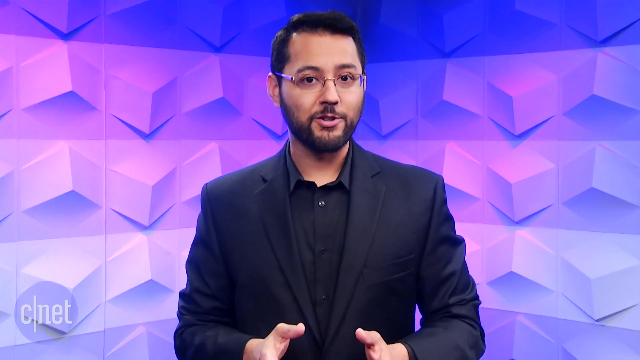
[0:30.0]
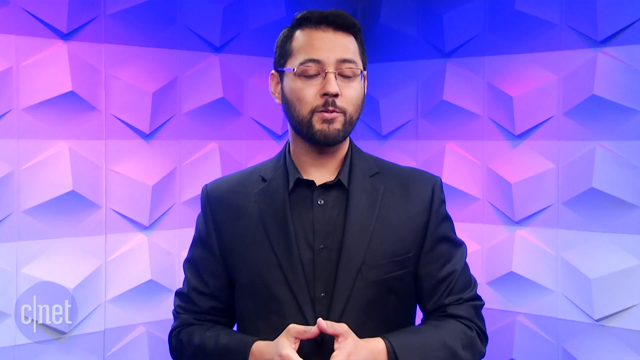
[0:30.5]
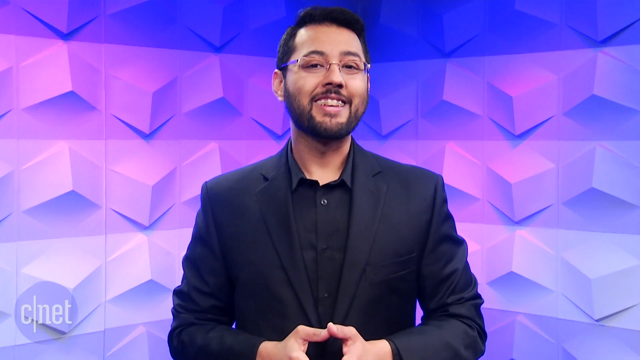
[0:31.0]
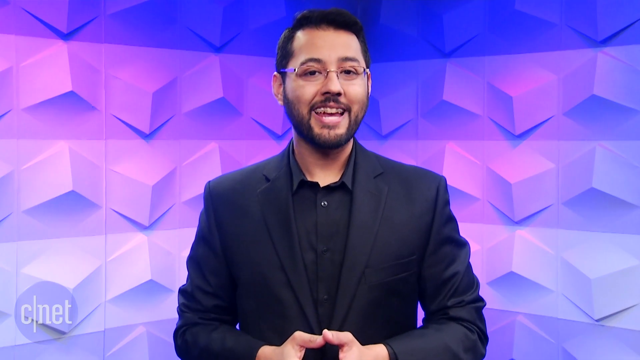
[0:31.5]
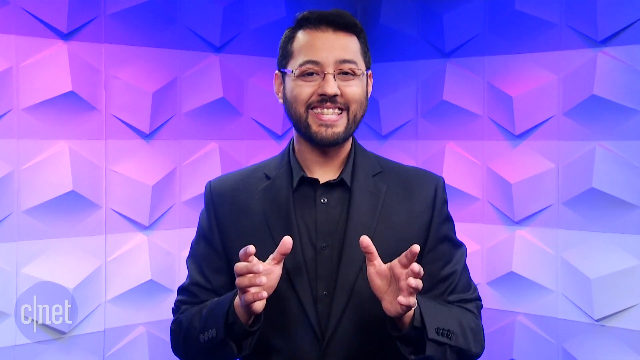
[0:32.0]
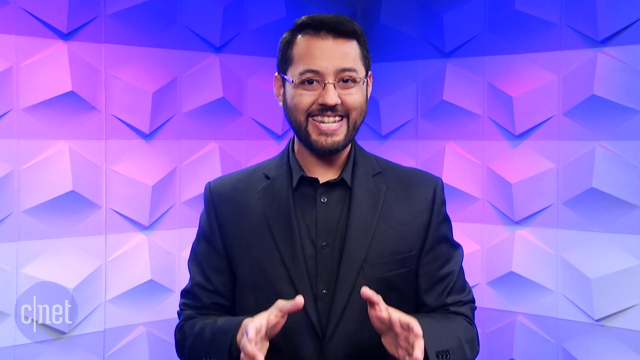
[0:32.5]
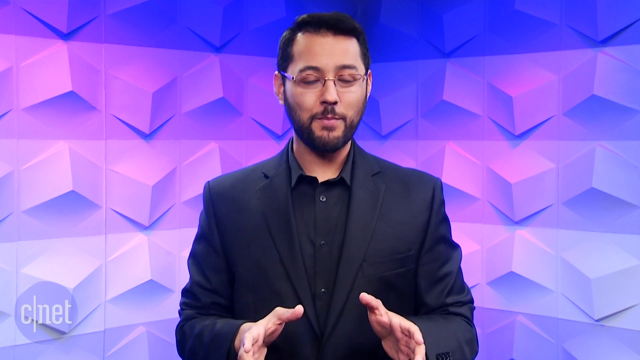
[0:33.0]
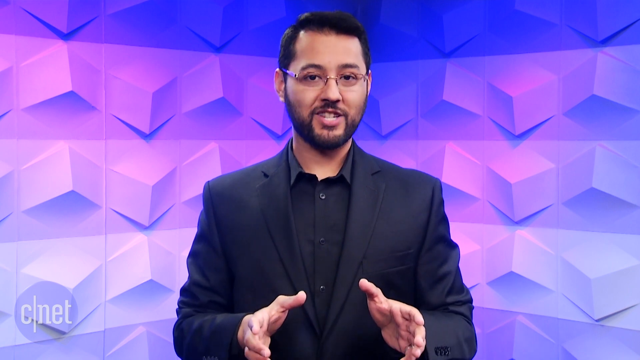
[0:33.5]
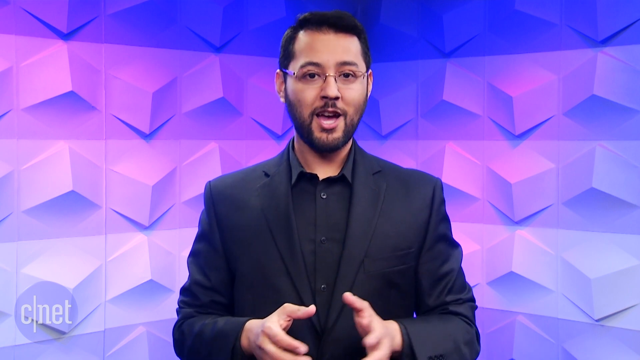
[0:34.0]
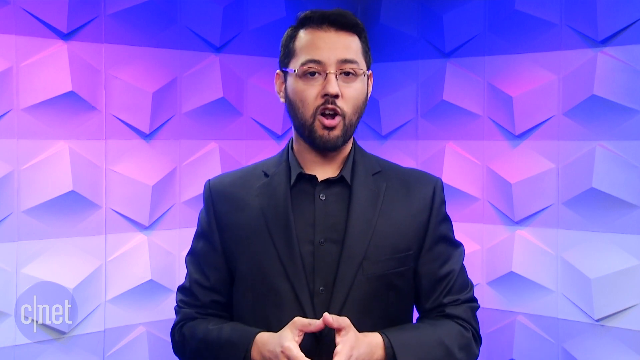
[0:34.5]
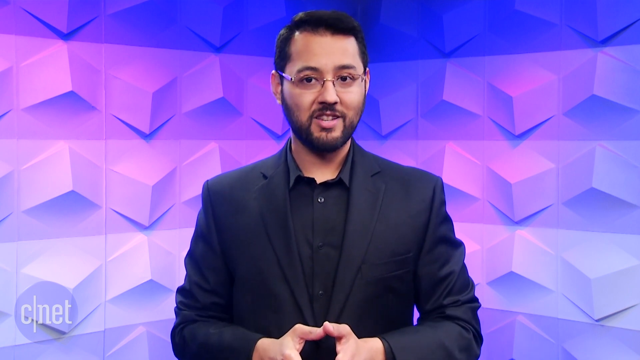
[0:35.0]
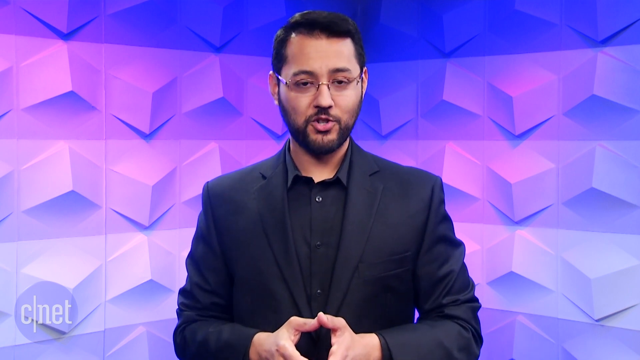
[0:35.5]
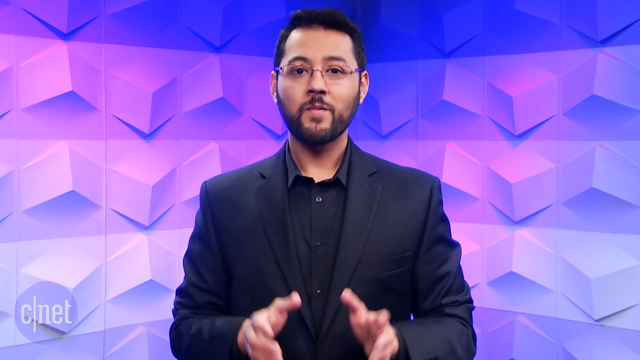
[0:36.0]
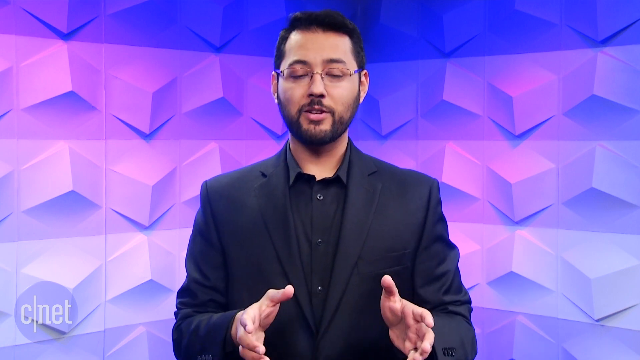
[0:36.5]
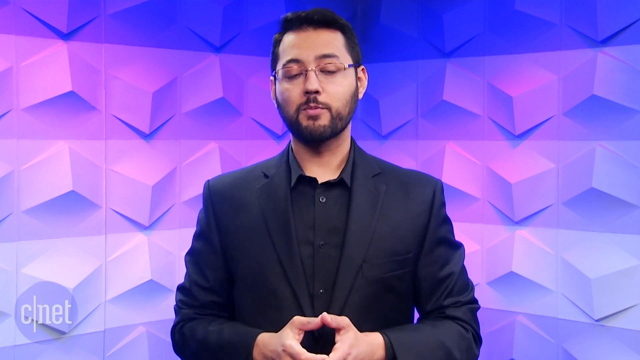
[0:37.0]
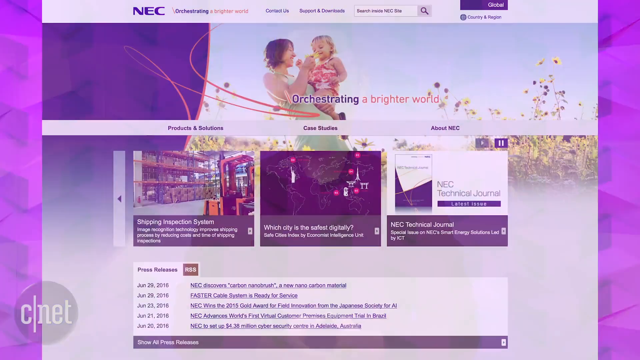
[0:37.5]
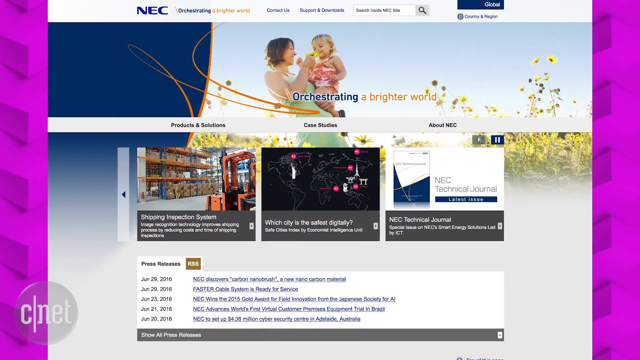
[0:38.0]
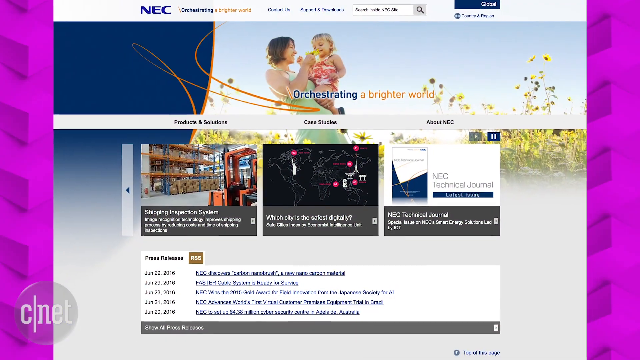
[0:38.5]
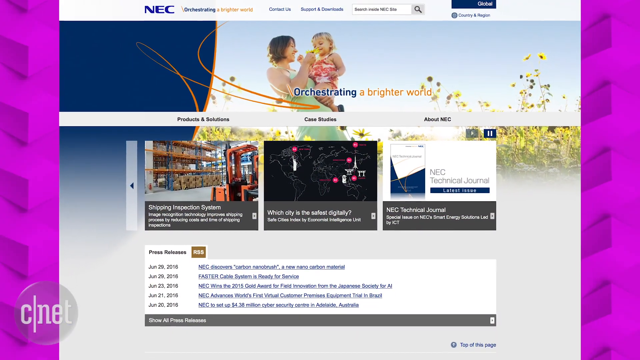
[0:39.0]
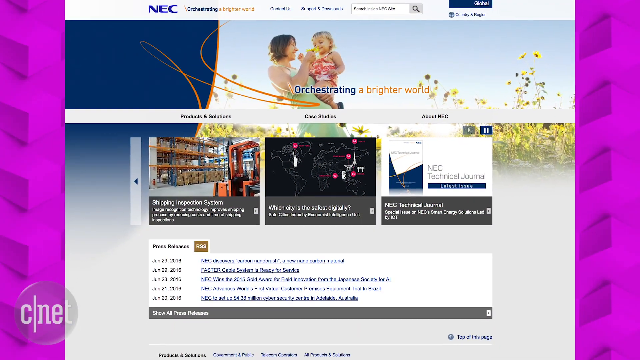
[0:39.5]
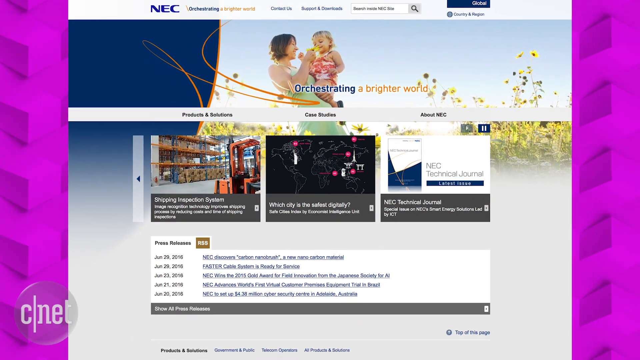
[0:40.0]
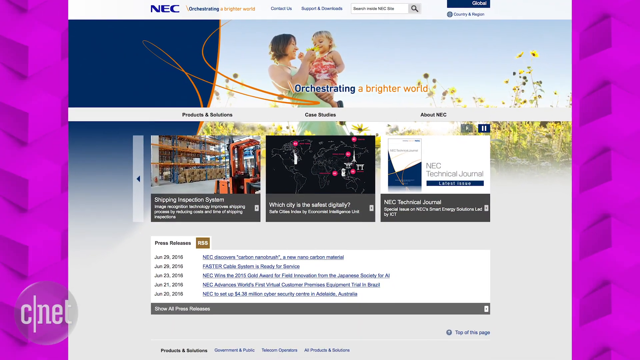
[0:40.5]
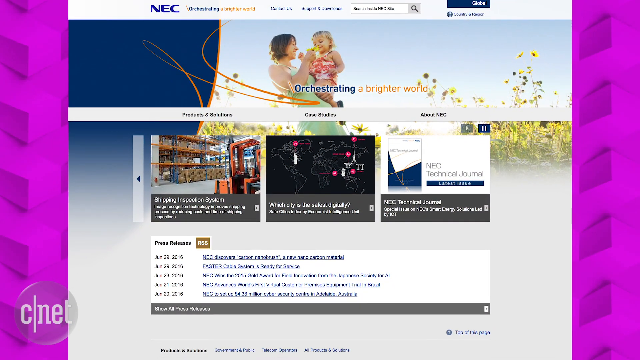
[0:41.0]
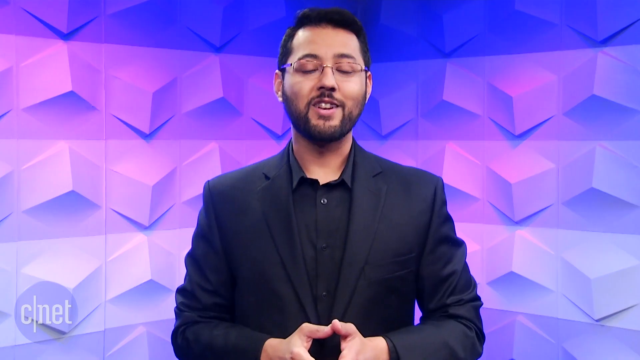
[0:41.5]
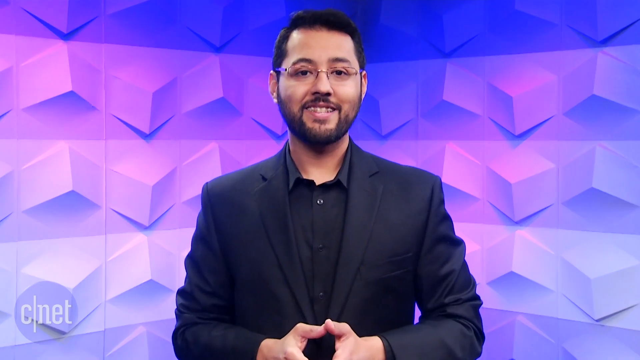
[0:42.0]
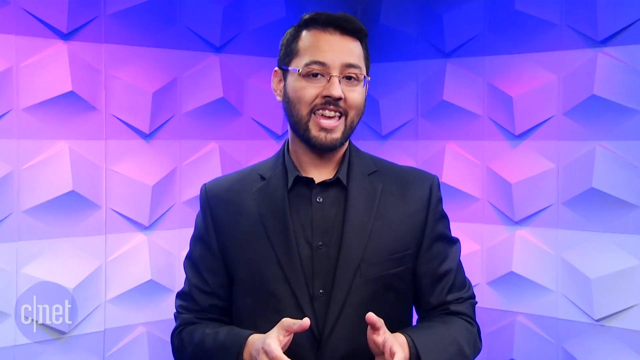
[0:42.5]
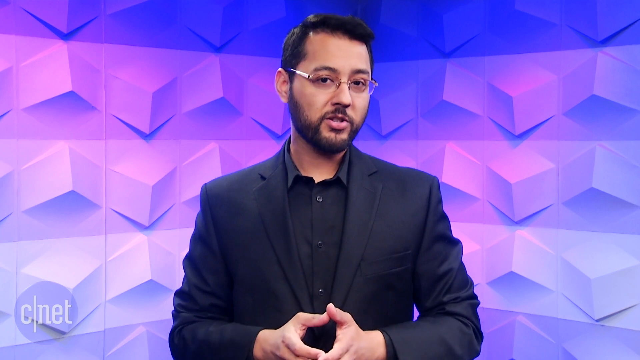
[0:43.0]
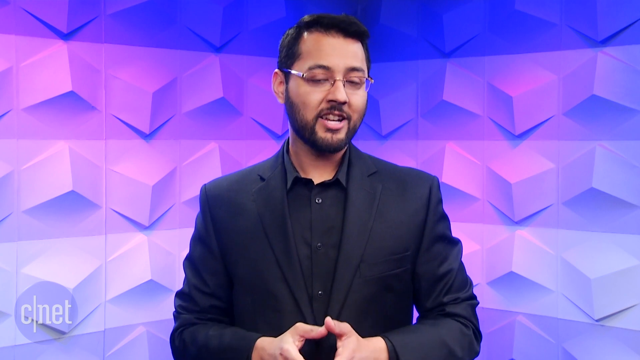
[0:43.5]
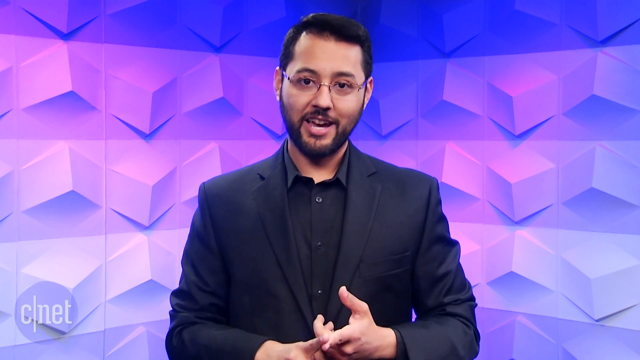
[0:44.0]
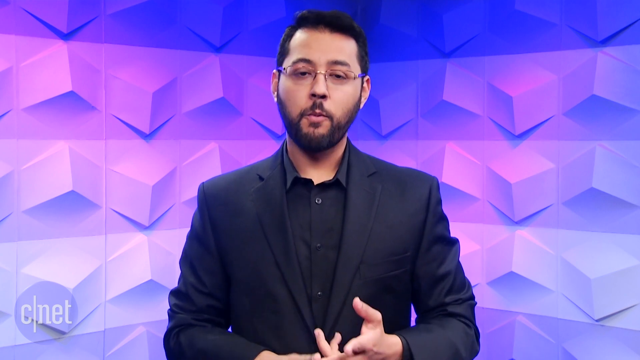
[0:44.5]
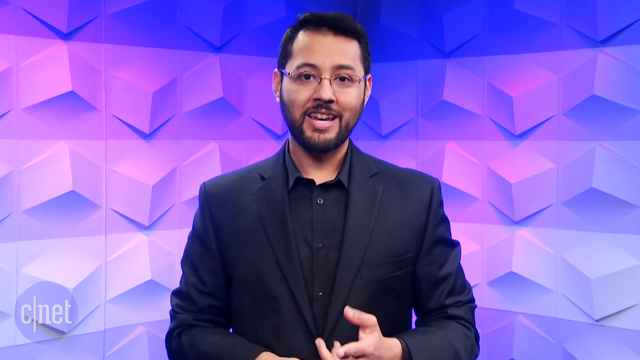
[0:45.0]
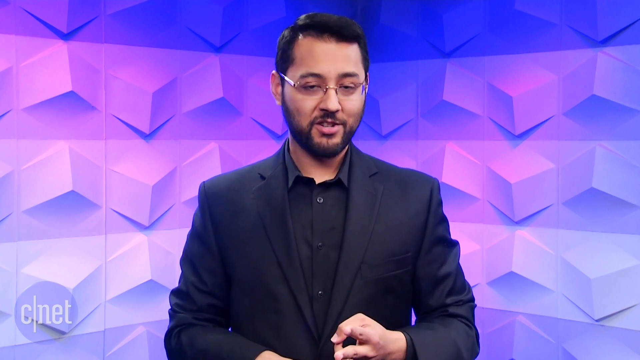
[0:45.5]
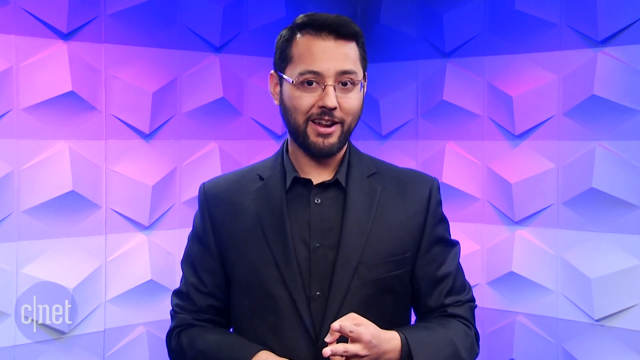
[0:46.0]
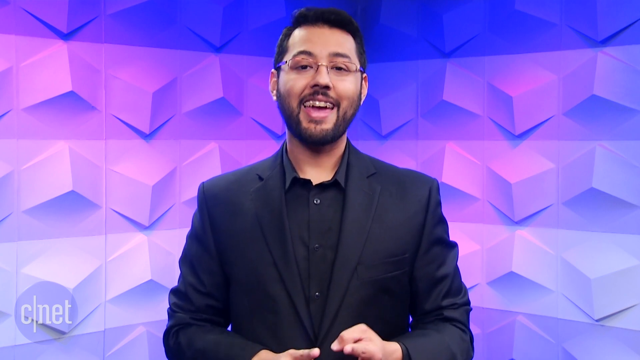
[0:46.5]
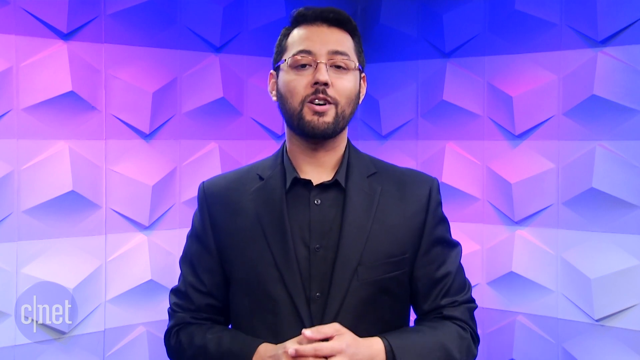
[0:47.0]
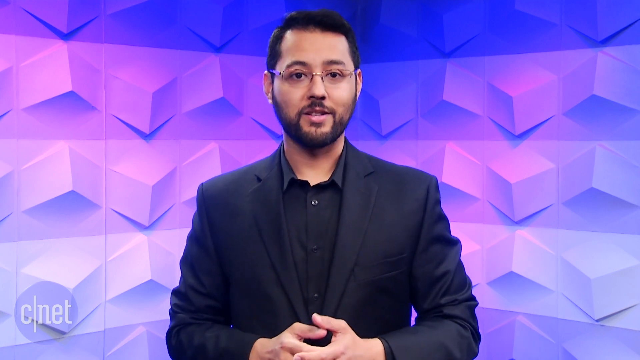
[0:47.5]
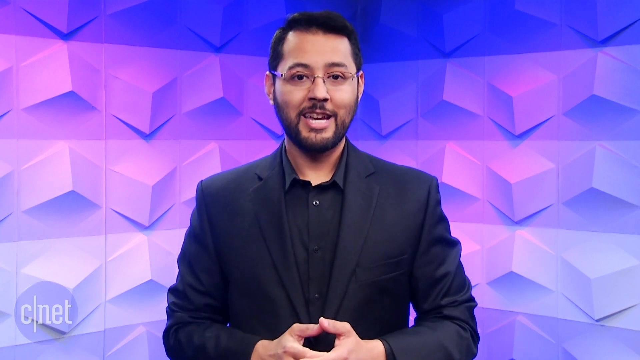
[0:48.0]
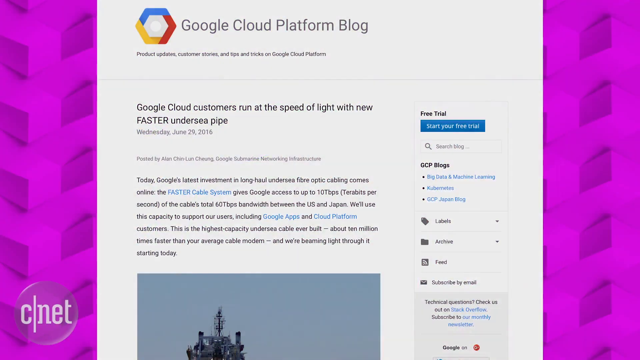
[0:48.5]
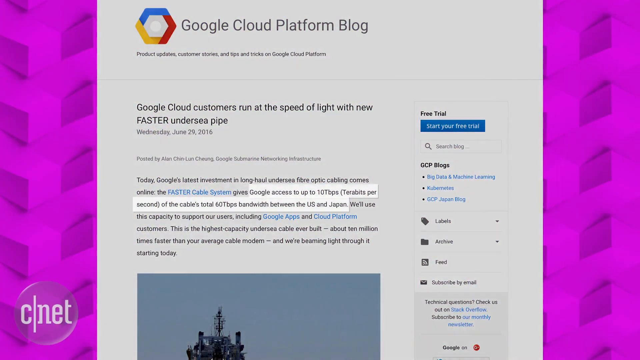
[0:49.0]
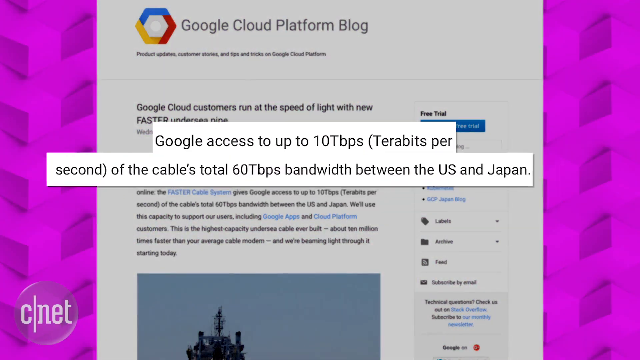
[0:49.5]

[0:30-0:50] The focus stays on the man in the studio in a black suit, with his mouth and hands moving as he explains. A picture then appears of a woman carrying a baby, along with other small pictures, including pictures of a map, and a headline reading "orchestrating a brighter world"; the picture zooms out. The video cuts back to the man in the studio, and then to a picture of a piece of writing that zooms out.